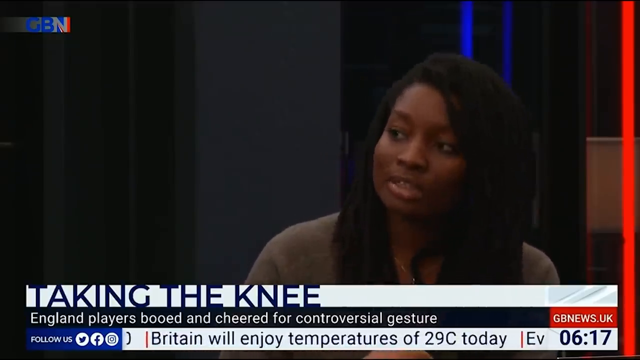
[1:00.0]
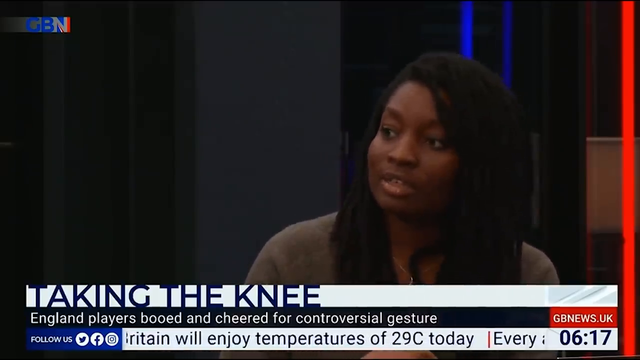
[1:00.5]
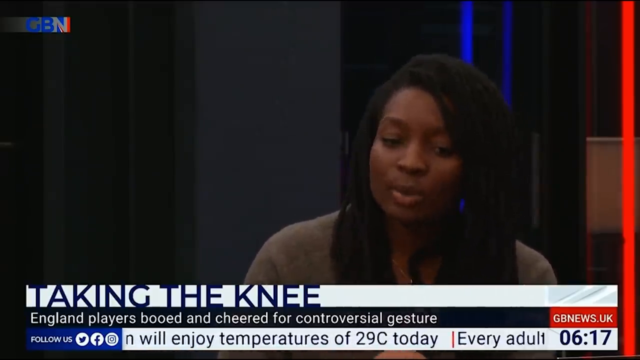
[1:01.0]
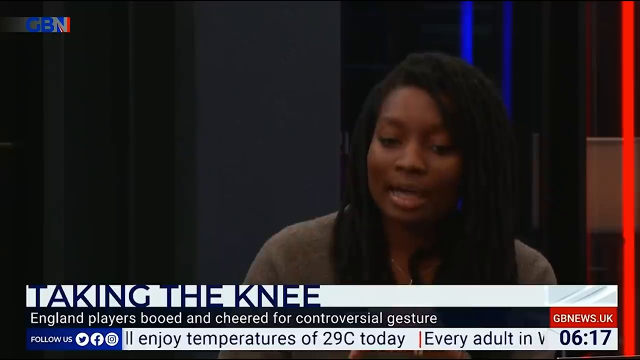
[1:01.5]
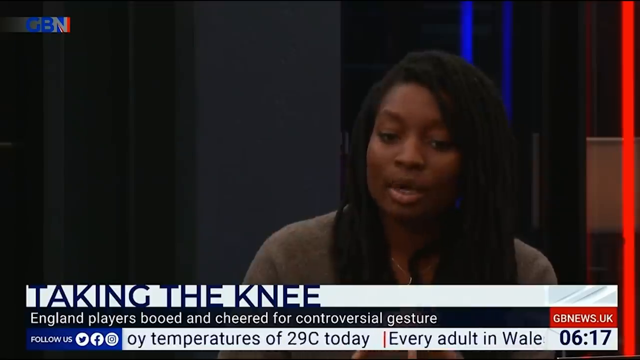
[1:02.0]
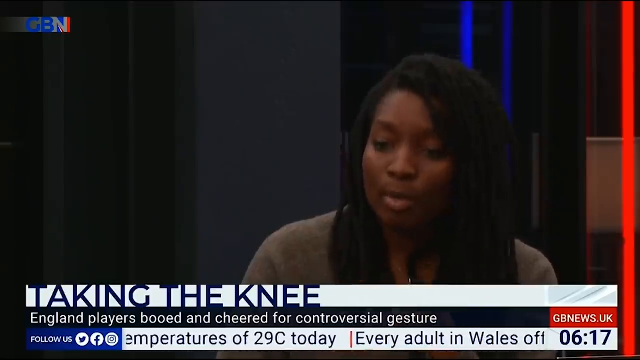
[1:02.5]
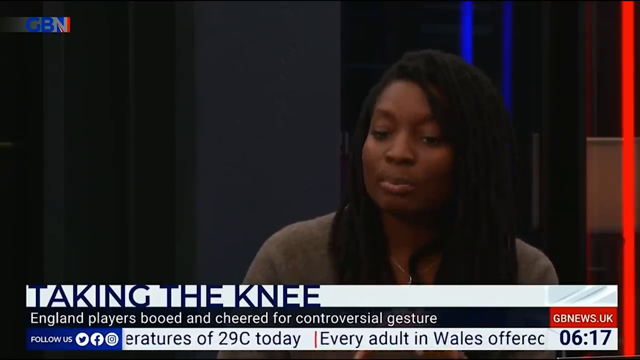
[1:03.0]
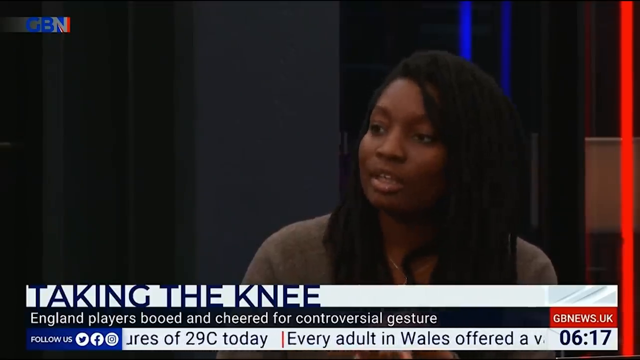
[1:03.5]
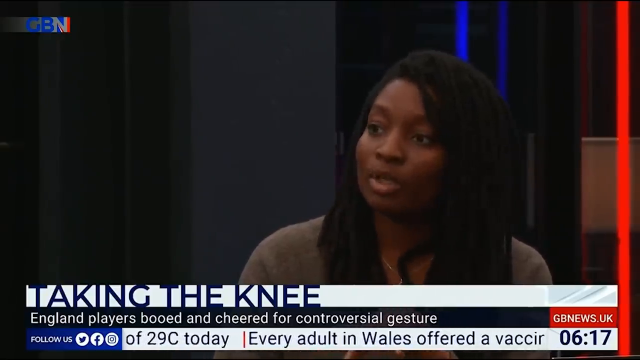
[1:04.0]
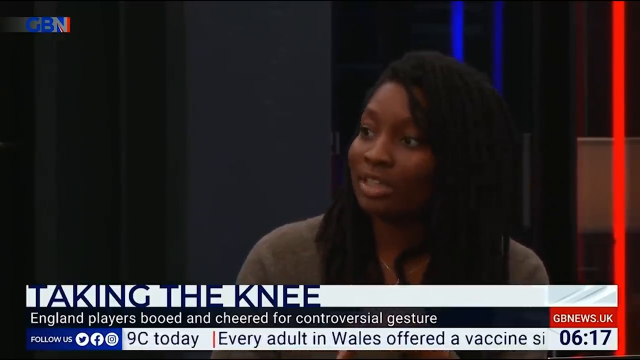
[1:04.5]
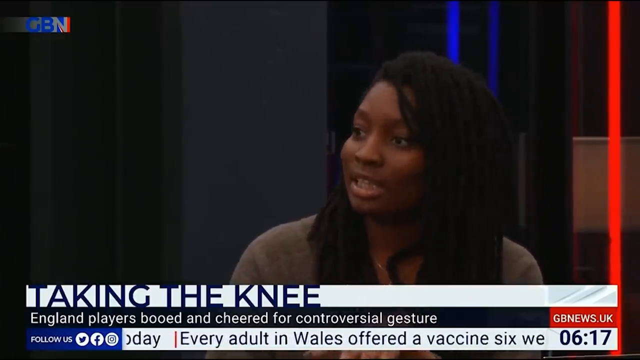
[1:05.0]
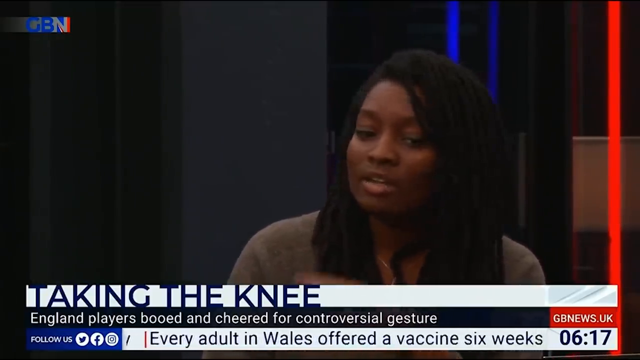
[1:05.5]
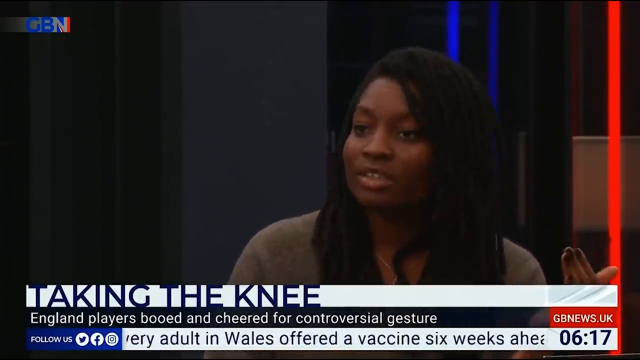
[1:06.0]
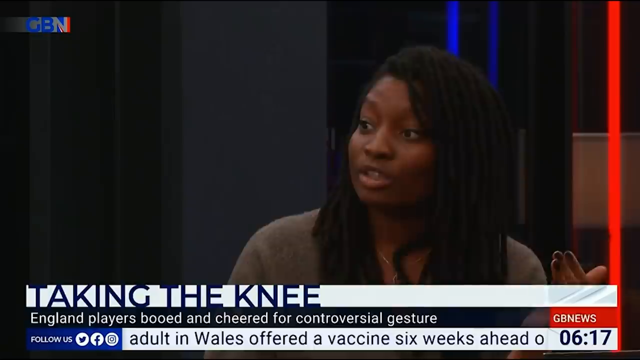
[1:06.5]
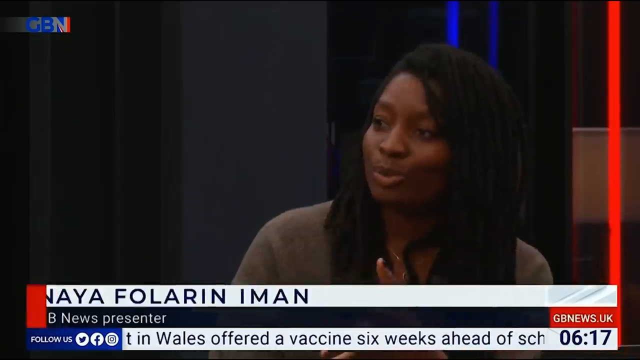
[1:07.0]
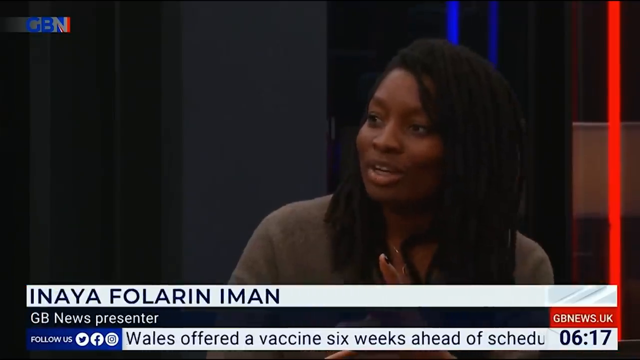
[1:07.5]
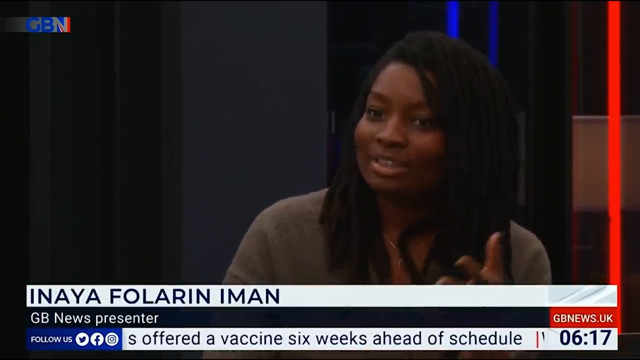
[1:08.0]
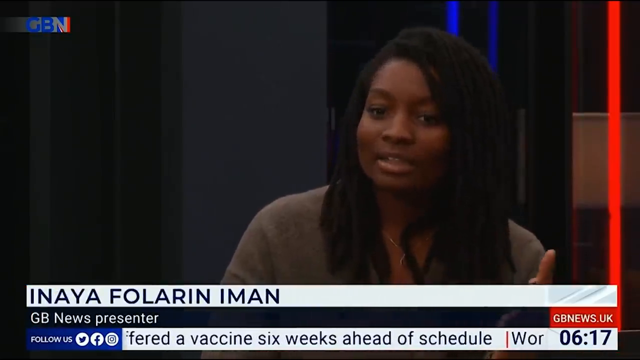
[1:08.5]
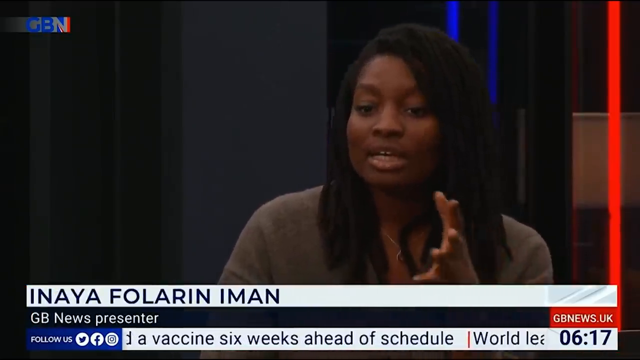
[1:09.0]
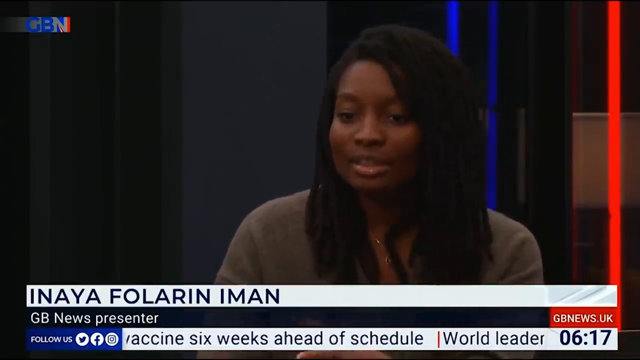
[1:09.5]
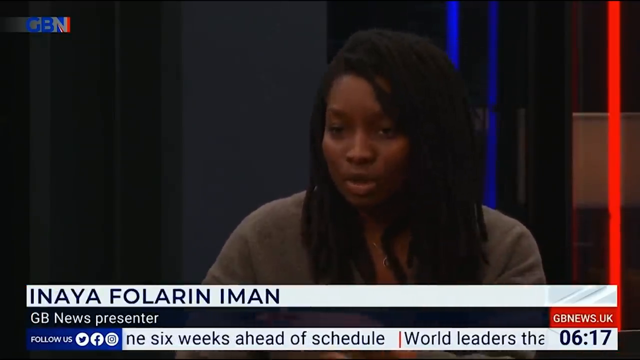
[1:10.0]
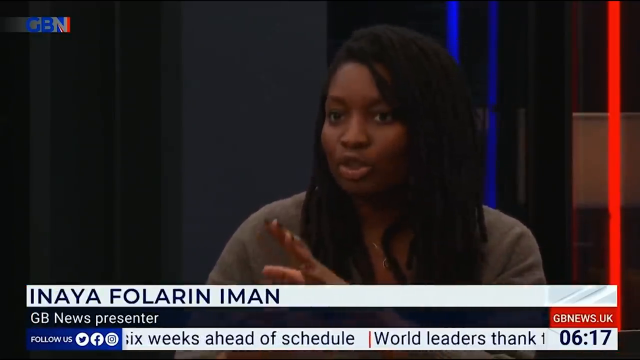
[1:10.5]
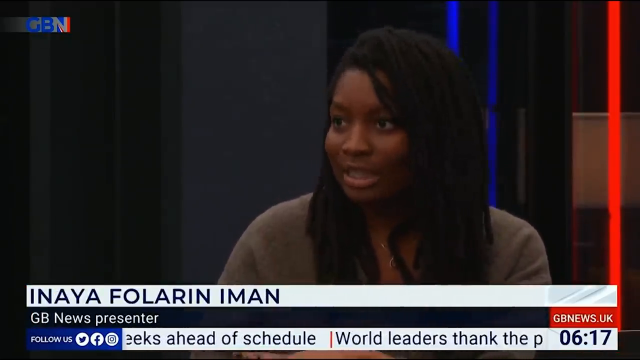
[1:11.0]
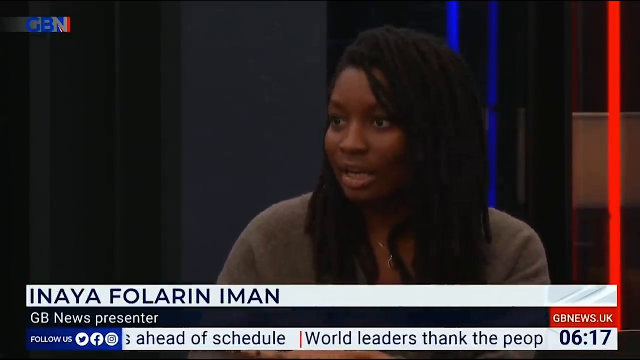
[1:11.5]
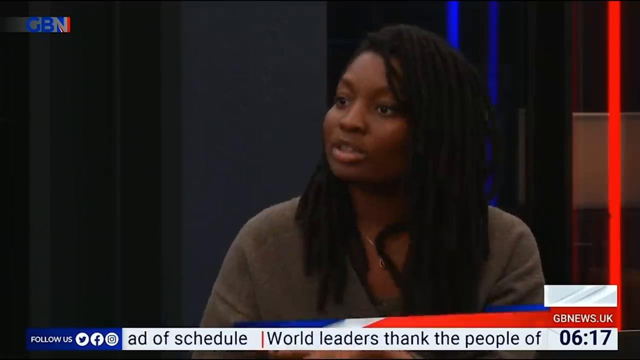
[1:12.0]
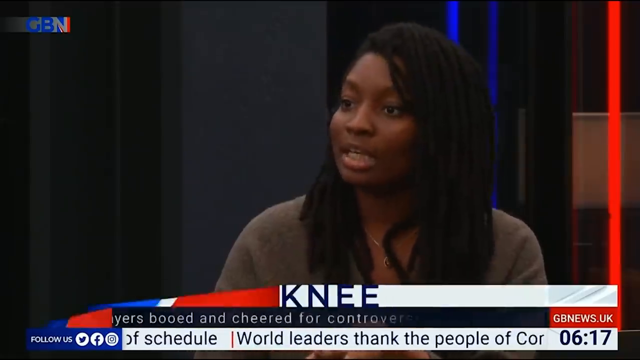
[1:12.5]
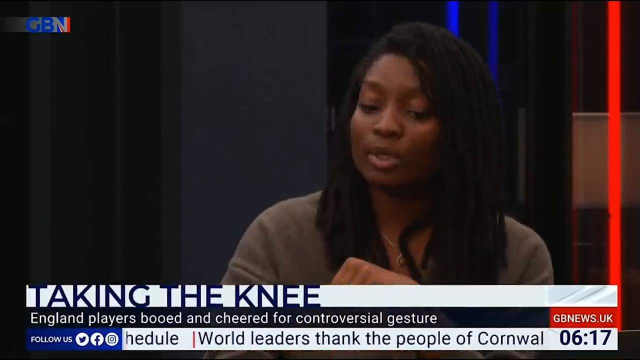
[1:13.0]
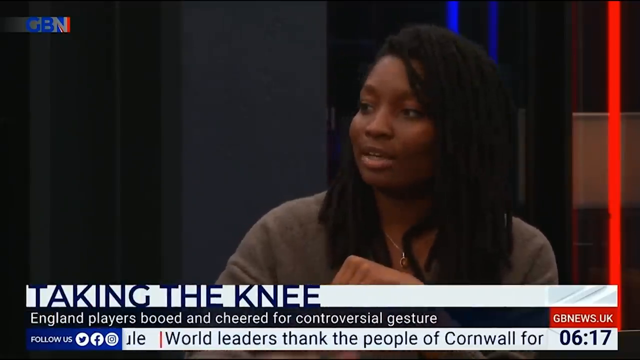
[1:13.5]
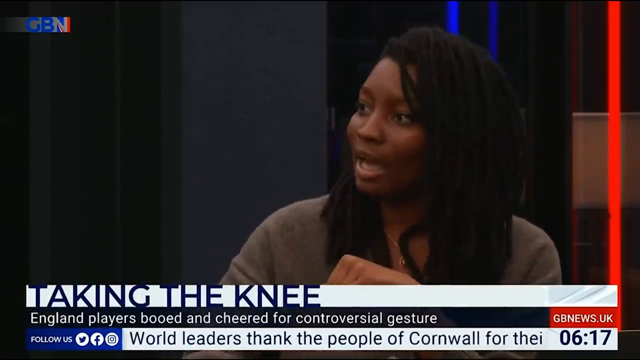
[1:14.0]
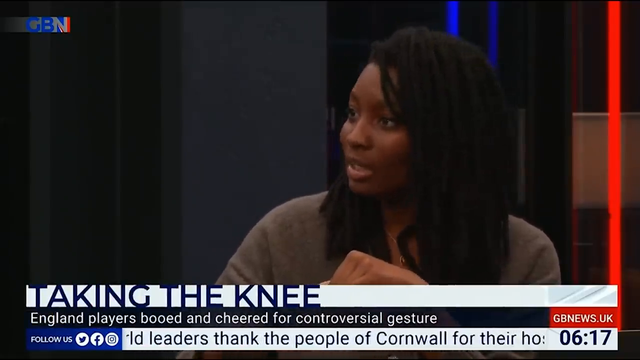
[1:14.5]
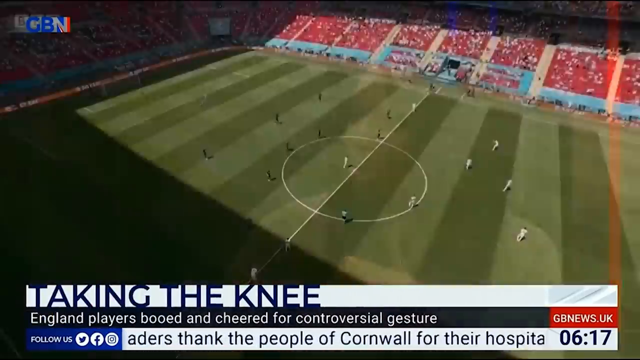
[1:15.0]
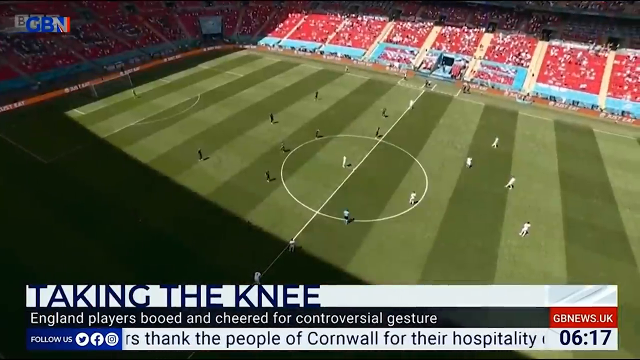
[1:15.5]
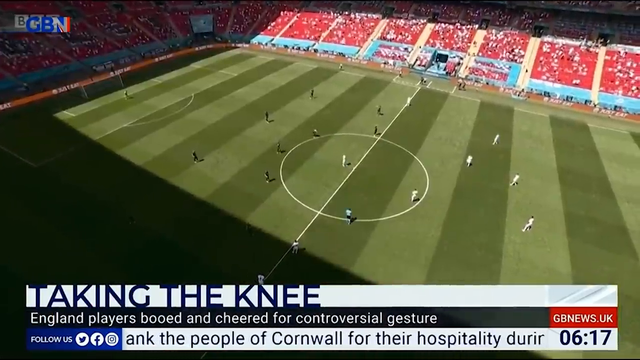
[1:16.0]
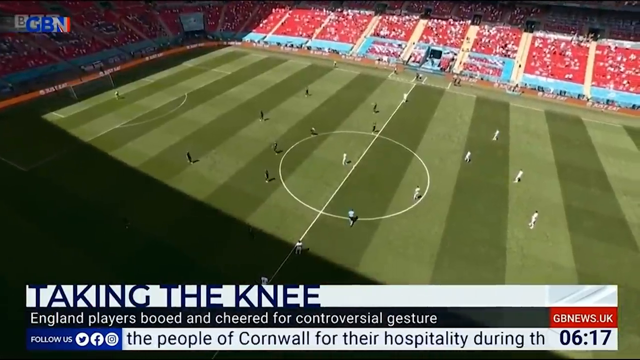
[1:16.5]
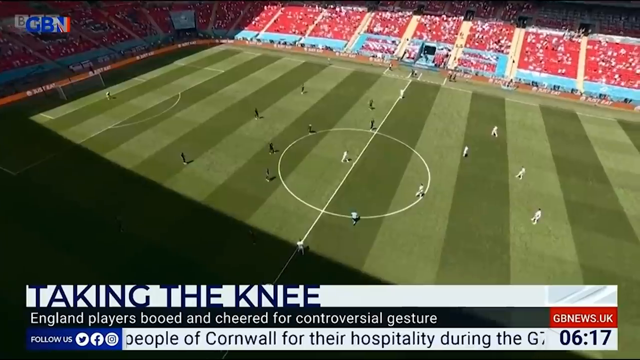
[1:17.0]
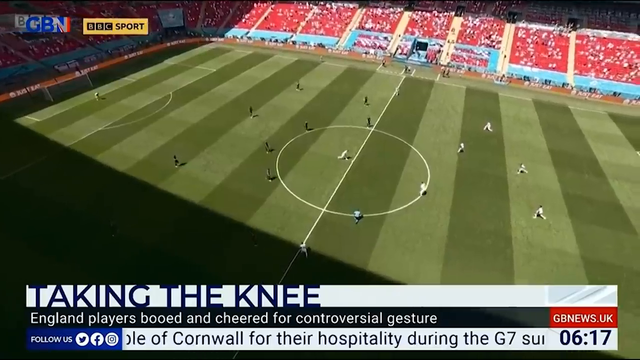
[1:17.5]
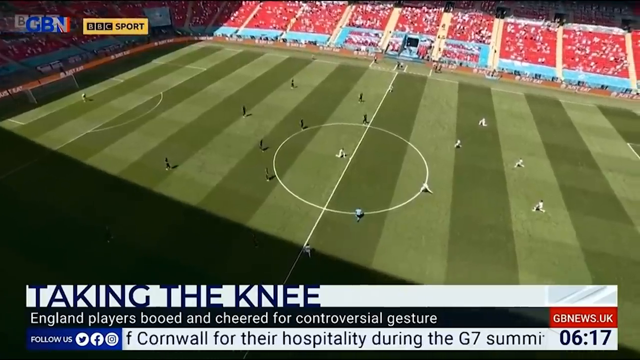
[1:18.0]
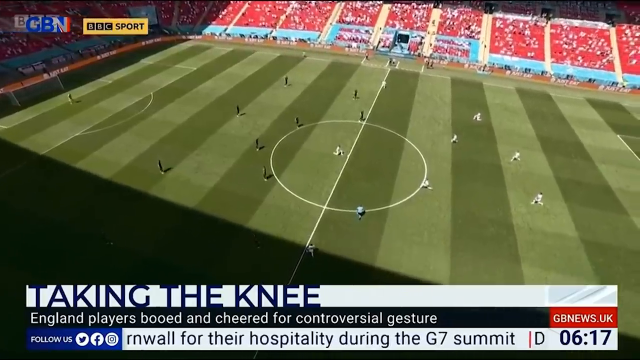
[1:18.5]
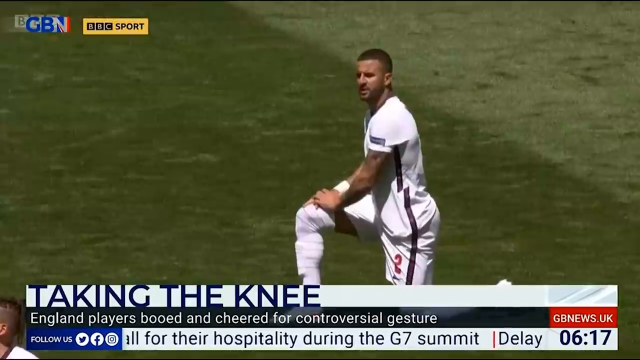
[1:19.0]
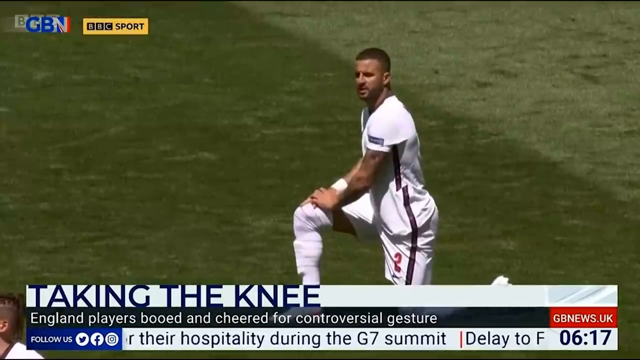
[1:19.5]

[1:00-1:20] On the right side of the screen is an African-American woman whose hair looks like it is in little long braids. She wears a brown shirt, looks toward the left side of the screen, and her chest faces the camera. In the bottom left, a white banner reads "taking the knee"; below it, a black banner in white letters reads "England players booed and cheered for controversial gesture"; below that, on a white background, "Britain will enjoy temperatures of 29 C today." In the bottom right is the time, "0617," with "GBnews.uk" in white letters above it. The woman talks and looks down toward the bottom right of the screen. Her left hand comes up with fingers pointing down like a little spider. She looks back toward the left side of the screen, moving her head left and right. Her left hand comes up, palm facing her, and moves toward the right side of the screen, then turns palm up and makes little gestures toward the right. Her knuckles show as she makes a fist. The video then cuts to an aerial view of a soccer game with players on the field. A soccer player kneels with both hands on the knee out in front of him and his other knee on the ground, facing the left side of the screen.